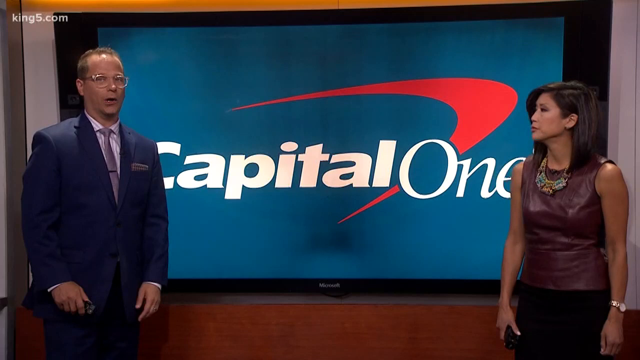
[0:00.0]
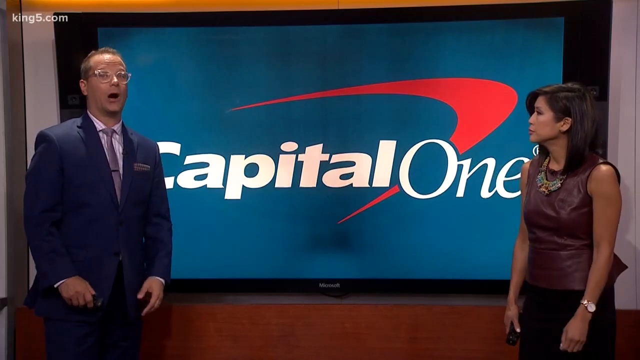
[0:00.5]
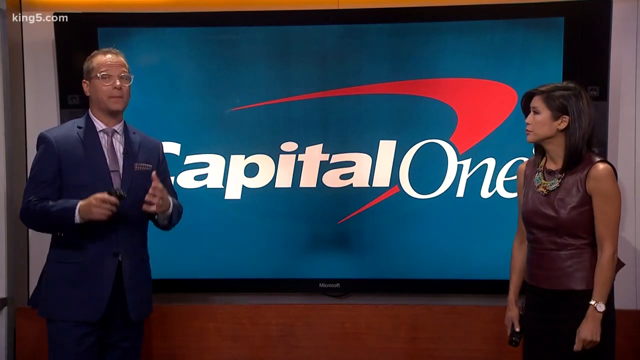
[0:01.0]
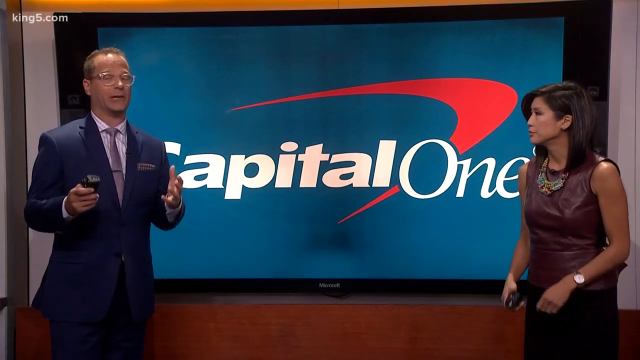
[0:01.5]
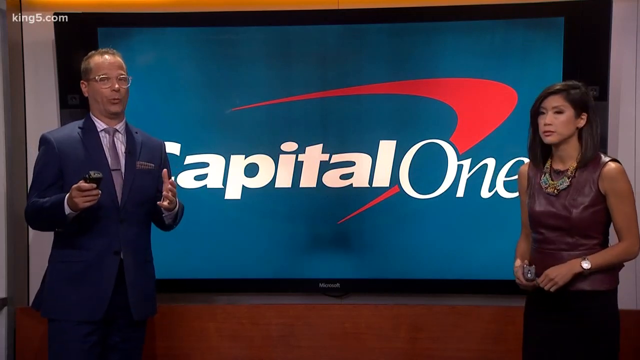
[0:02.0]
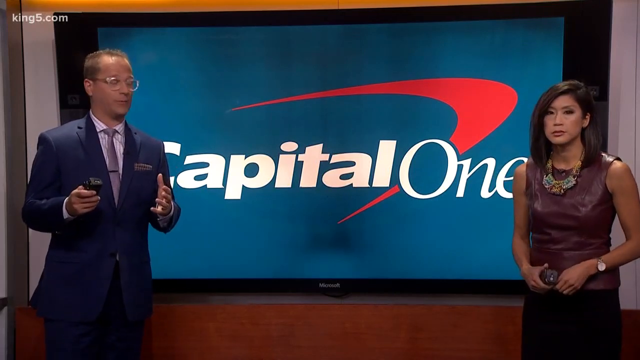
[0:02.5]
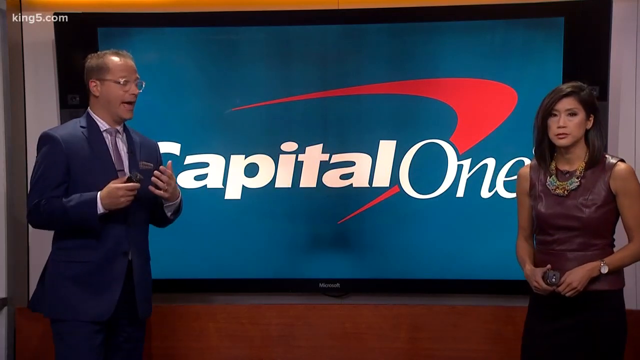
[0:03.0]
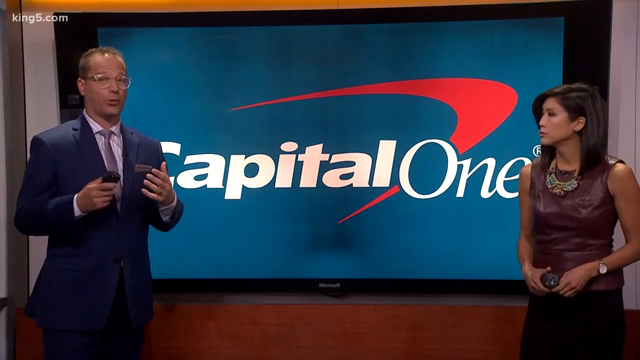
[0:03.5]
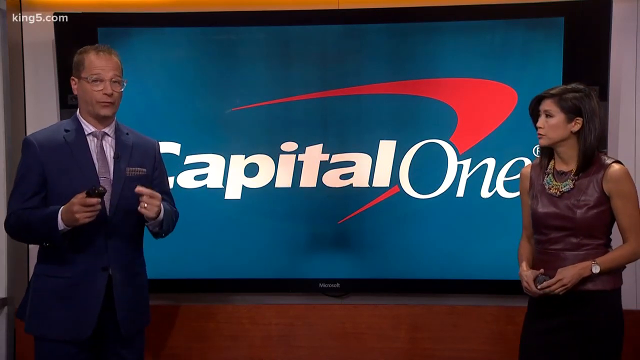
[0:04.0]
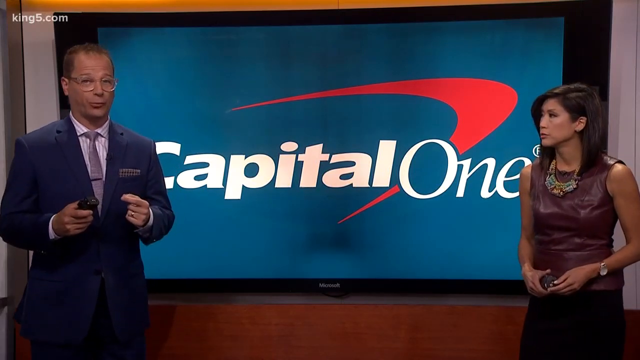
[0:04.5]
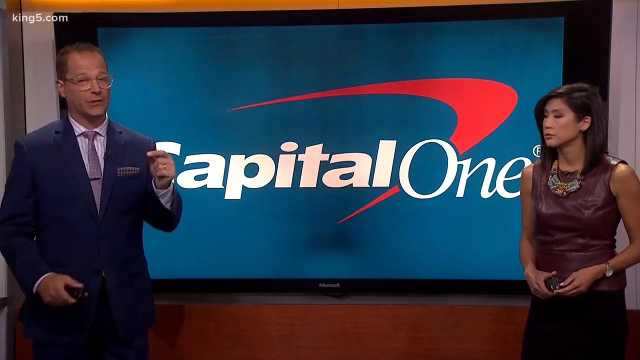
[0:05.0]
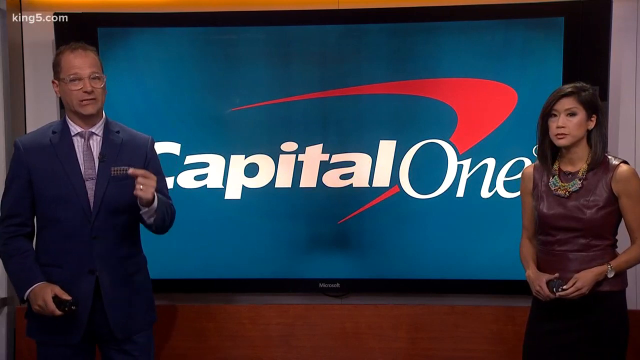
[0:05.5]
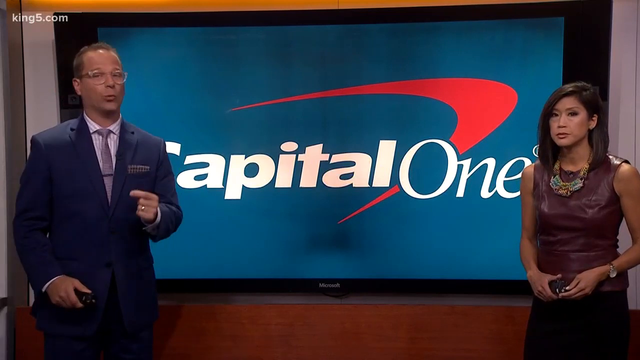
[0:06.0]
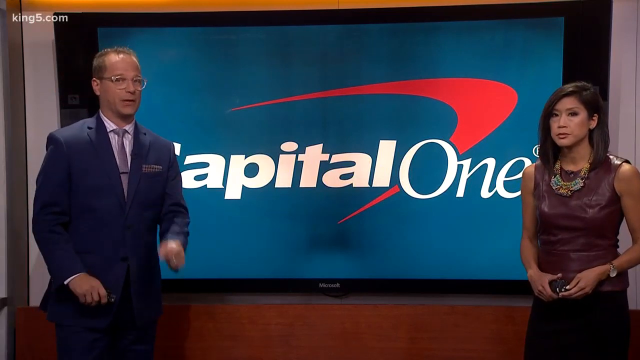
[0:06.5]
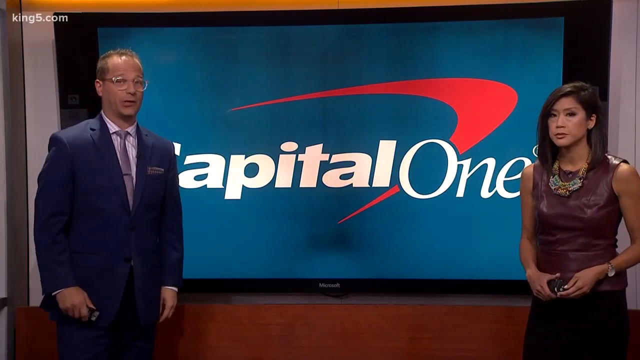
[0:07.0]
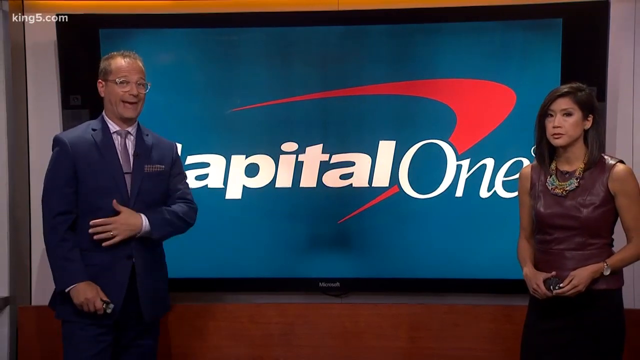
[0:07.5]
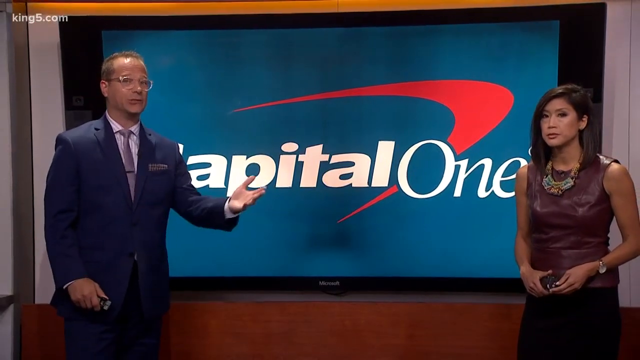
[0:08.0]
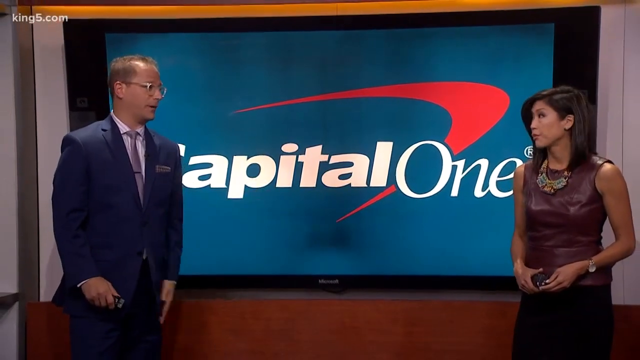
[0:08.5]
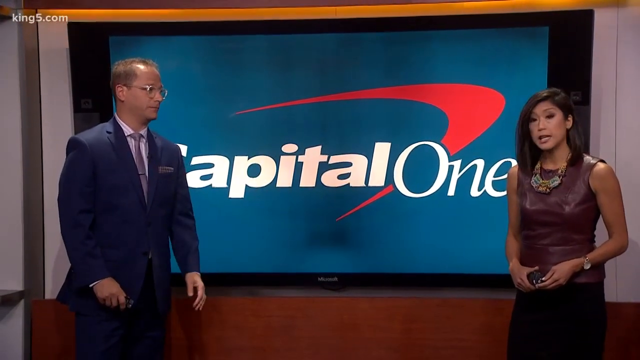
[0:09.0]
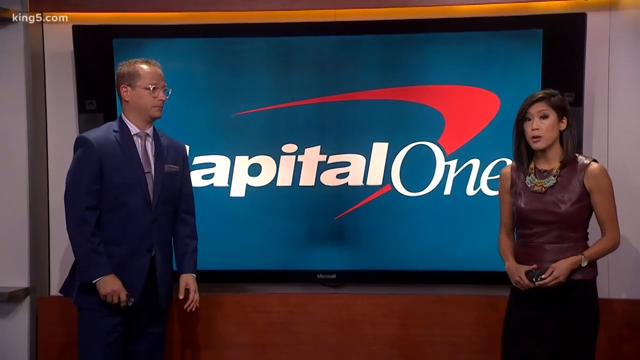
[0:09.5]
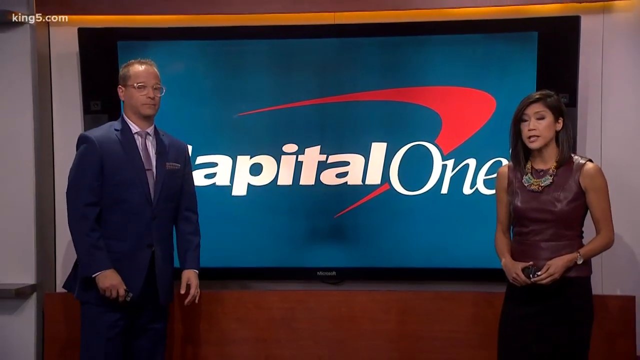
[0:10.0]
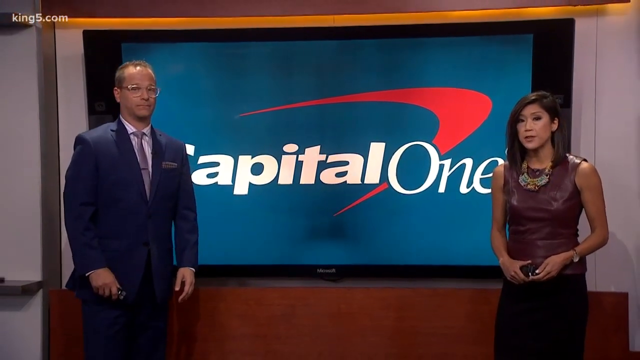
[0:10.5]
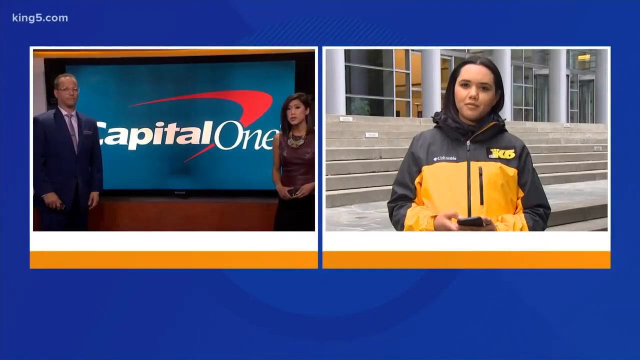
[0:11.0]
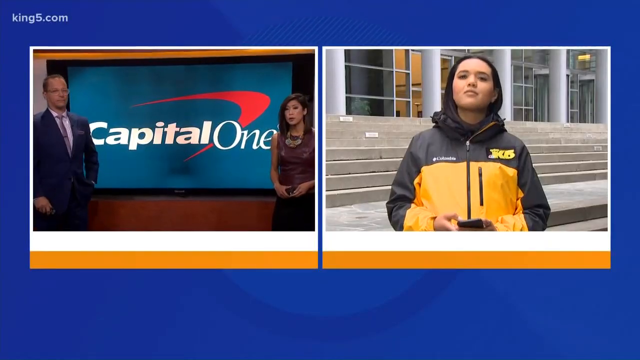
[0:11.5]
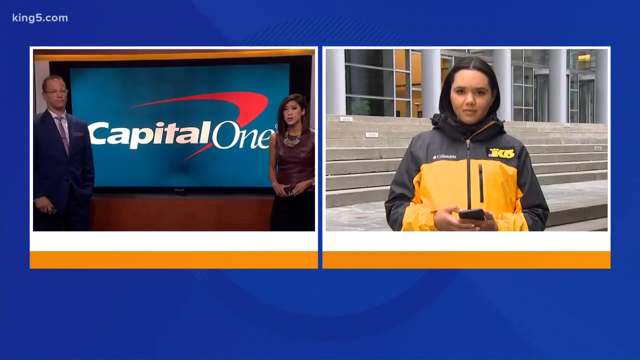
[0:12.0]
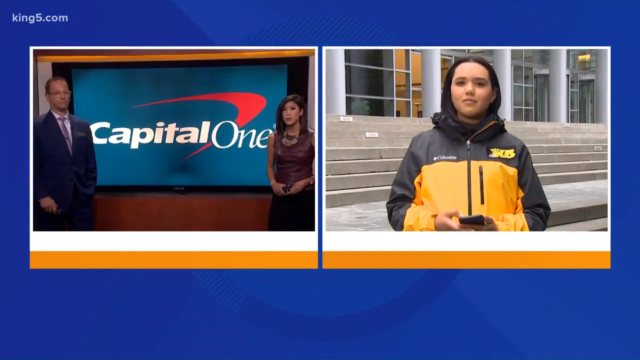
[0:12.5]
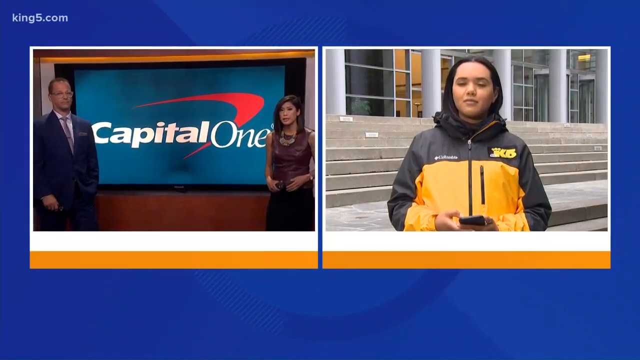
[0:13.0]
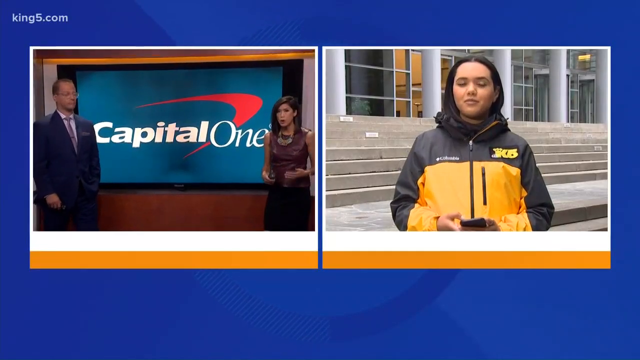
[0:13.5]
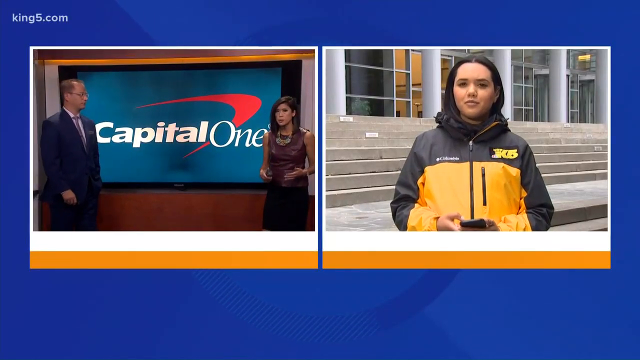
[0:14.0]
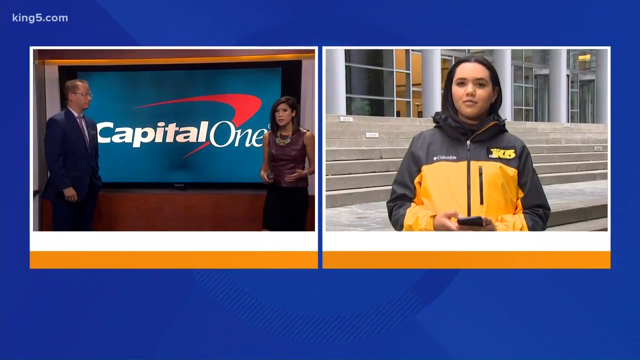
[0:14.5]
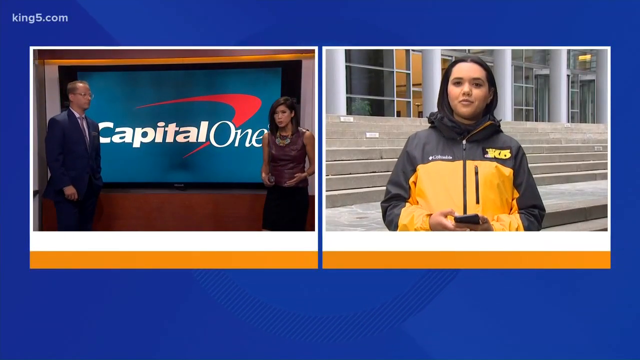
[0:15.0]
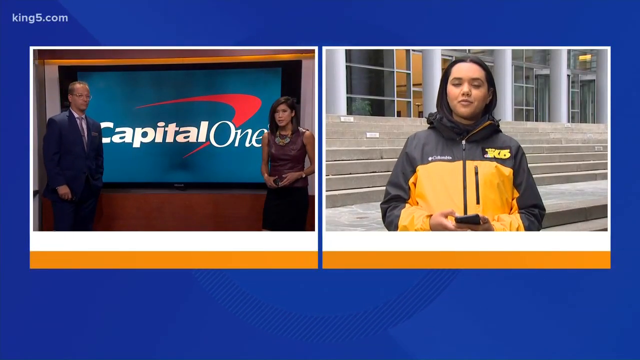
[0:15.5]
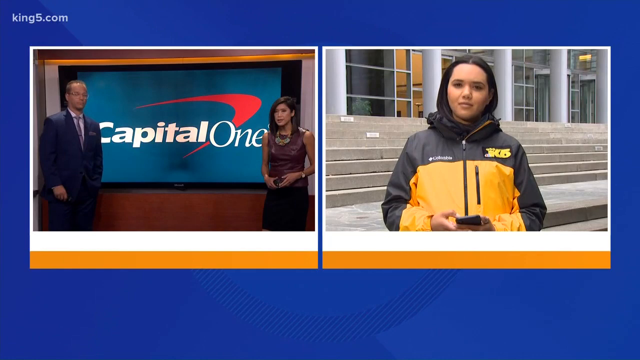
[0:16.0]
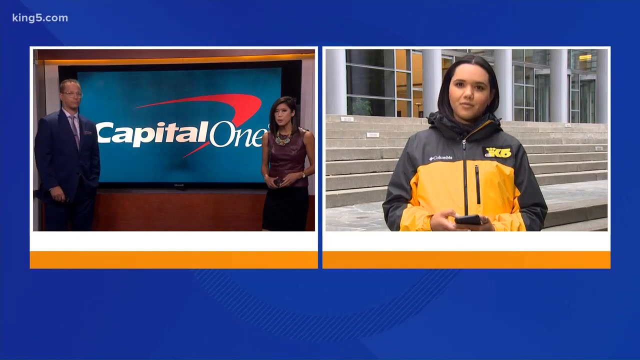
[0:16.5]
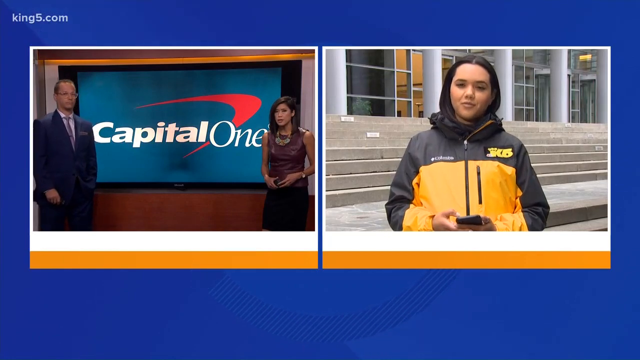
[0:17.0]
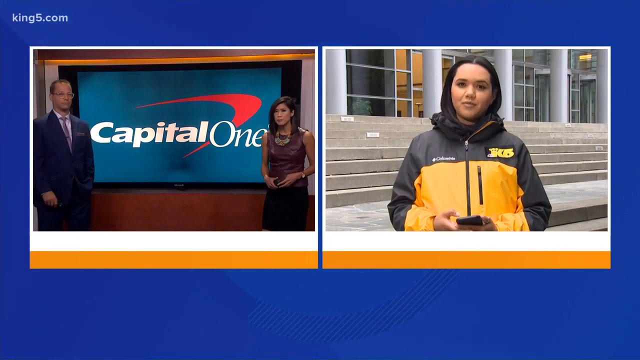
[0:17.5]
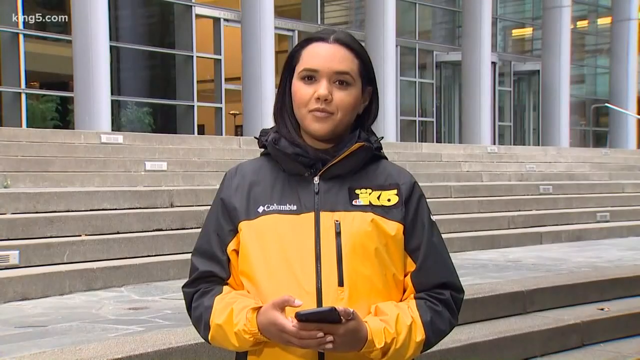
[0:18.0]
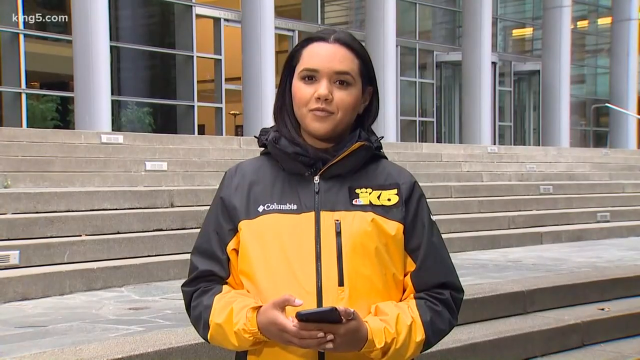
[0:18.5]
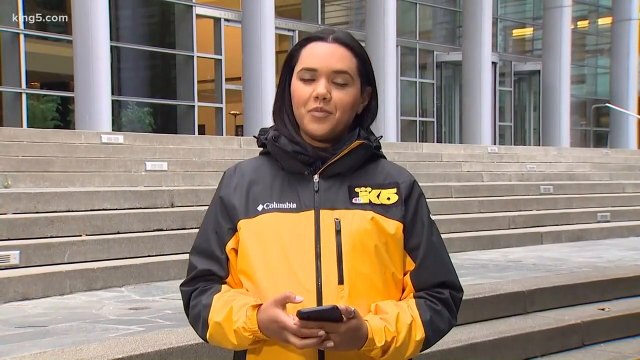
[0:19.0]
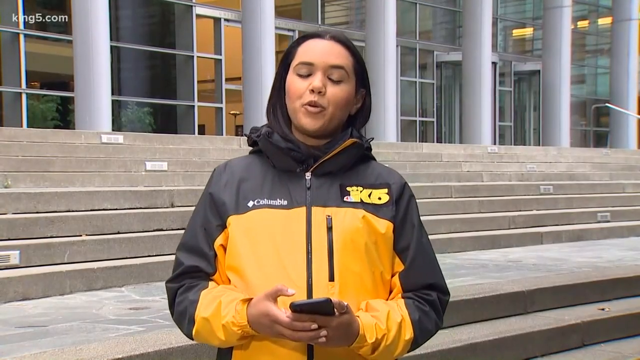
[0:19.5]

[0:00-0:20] In the top left corner of the screen, text indicates that the video is from king5.com. The footage is from a news broadcast by Capital One with two news anchors. On the left is a middle-aged blonde man wearing glasses, a blue suit, a white shirt and a purple tie. On the right is a woman with medium-length brown hair, wearing a leather burgundy vest, jewelry on her neck and something black on the bottom. As they speak, with the man doing most of the talking, the screen splits in two and a young white woman wearing a yellow and dark grey Columbia jacket appears. The screen then focuses only on her as she nods. Behind her is a building with clear windows and some stairs, and she continues speaking to the news anchors.